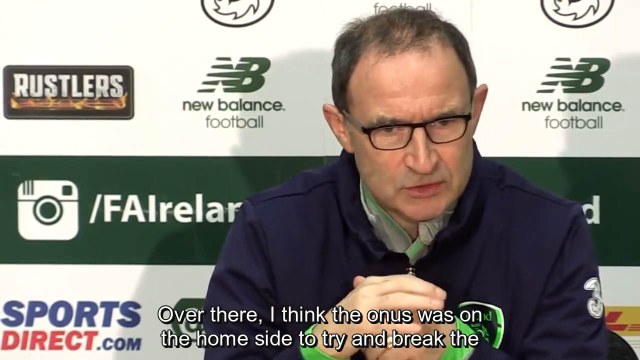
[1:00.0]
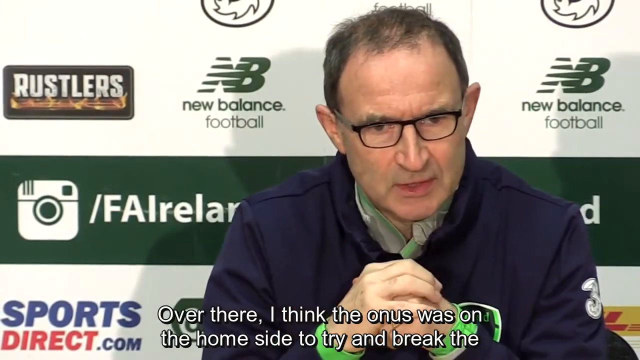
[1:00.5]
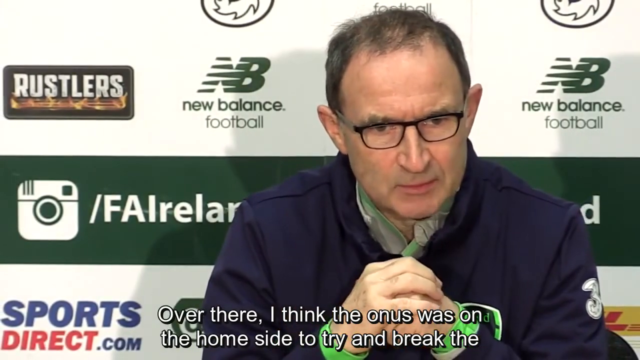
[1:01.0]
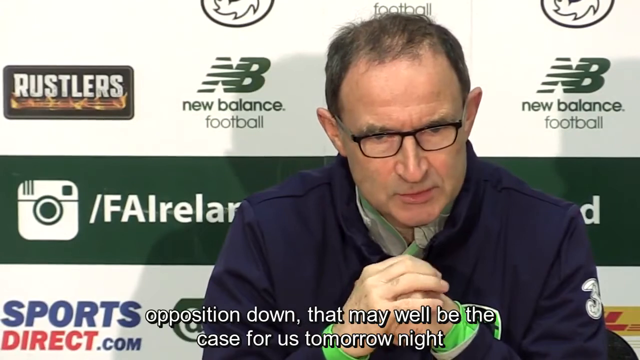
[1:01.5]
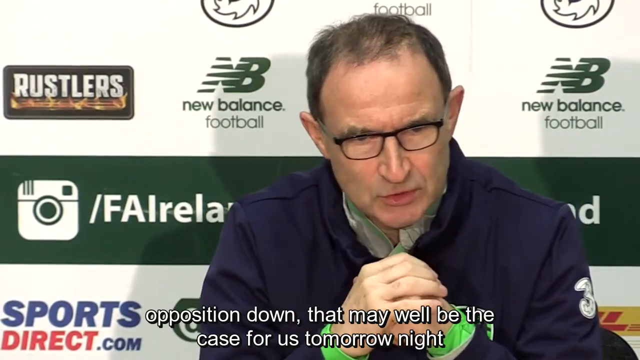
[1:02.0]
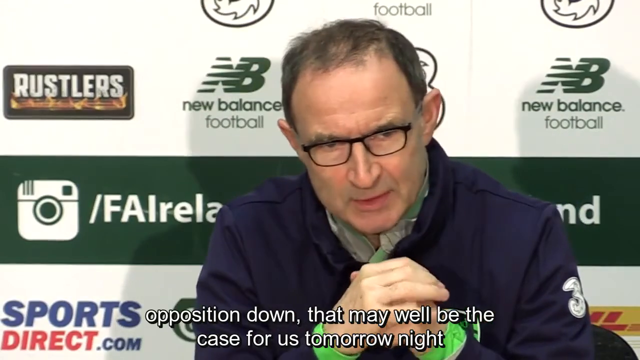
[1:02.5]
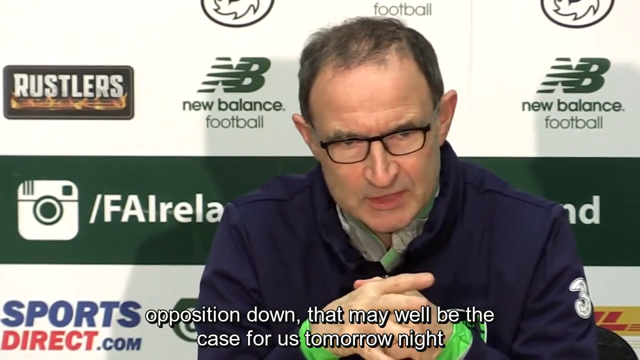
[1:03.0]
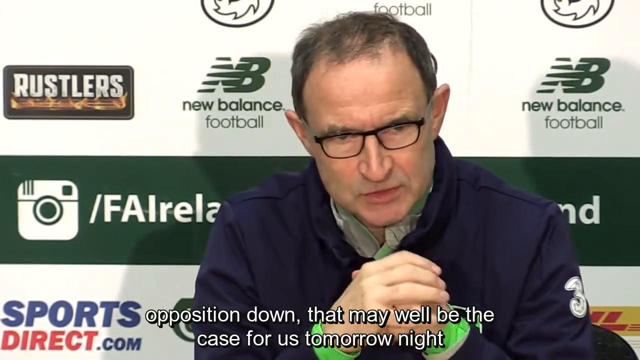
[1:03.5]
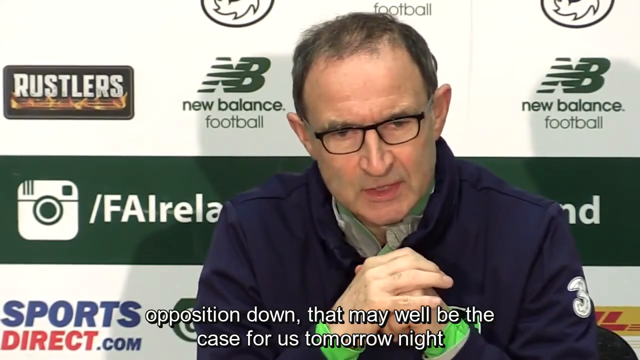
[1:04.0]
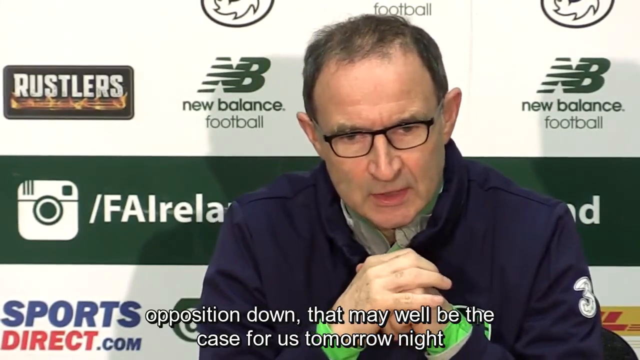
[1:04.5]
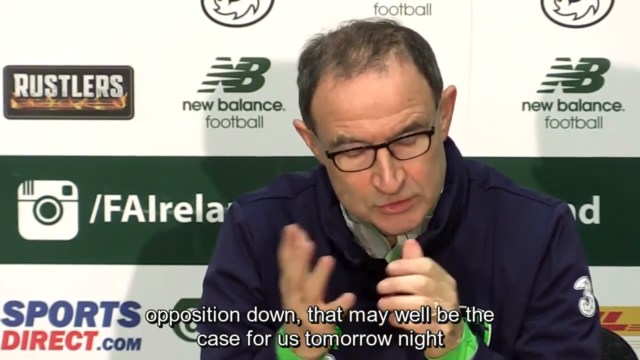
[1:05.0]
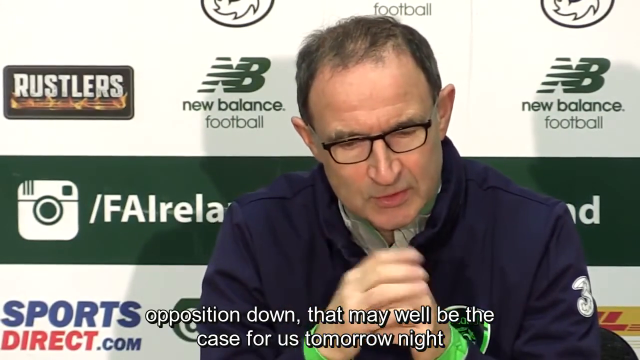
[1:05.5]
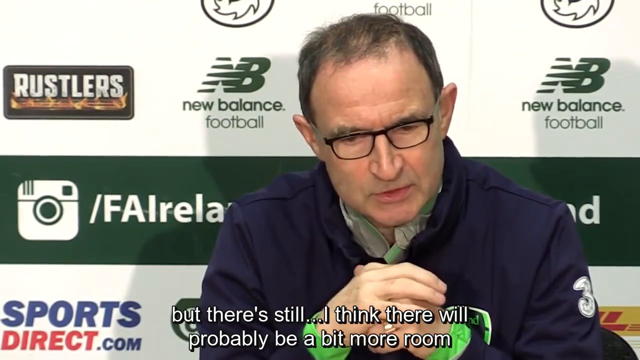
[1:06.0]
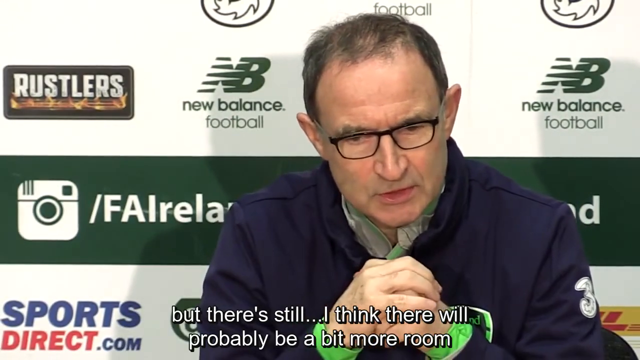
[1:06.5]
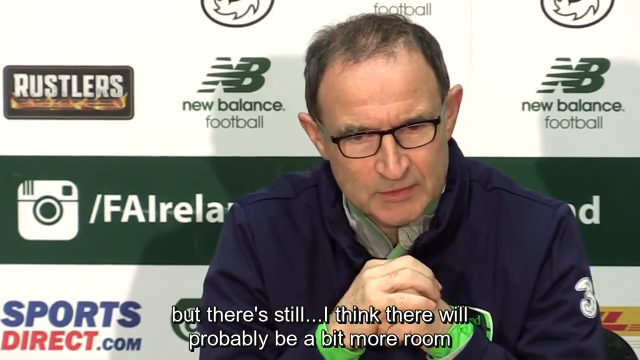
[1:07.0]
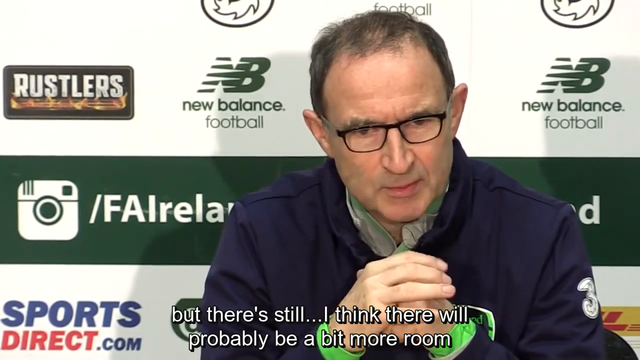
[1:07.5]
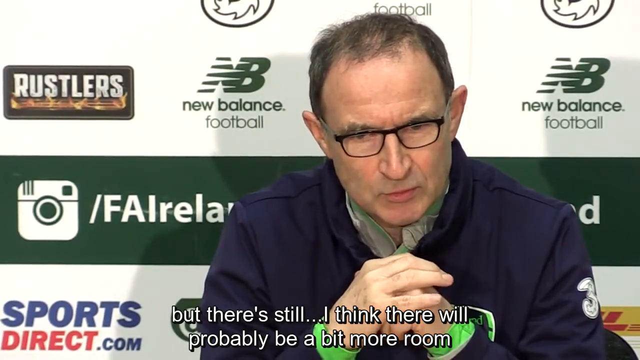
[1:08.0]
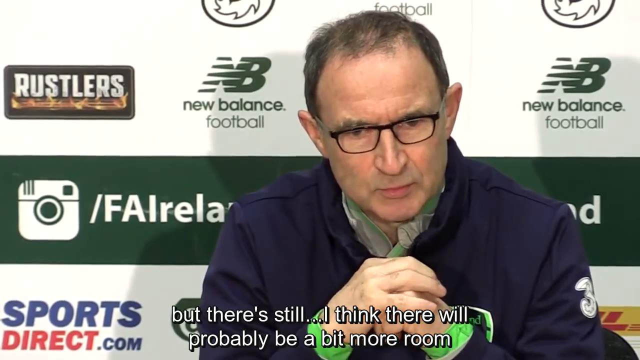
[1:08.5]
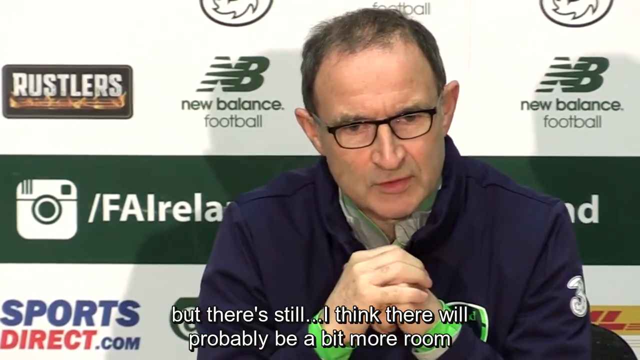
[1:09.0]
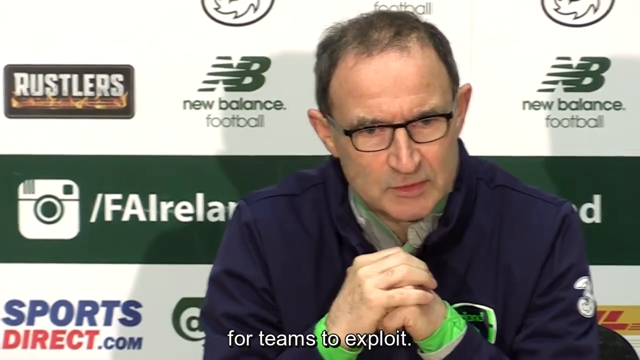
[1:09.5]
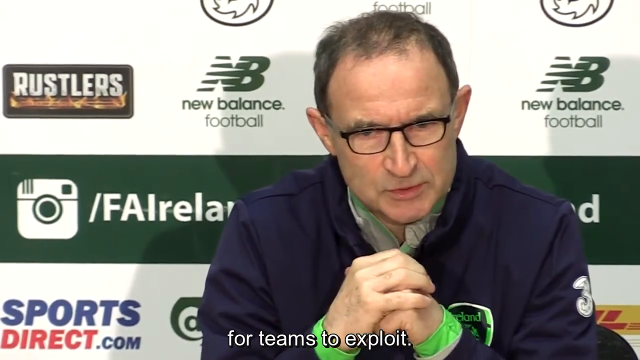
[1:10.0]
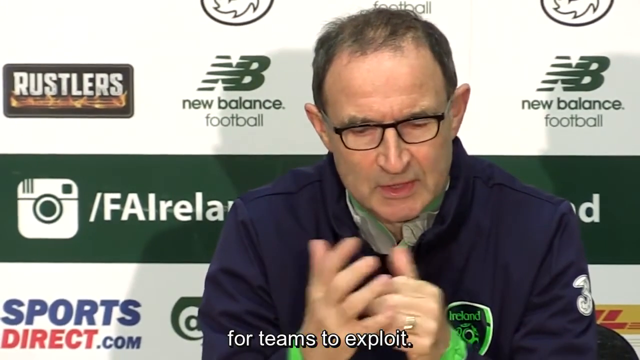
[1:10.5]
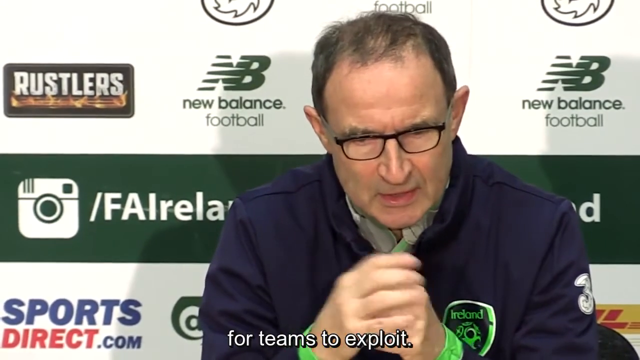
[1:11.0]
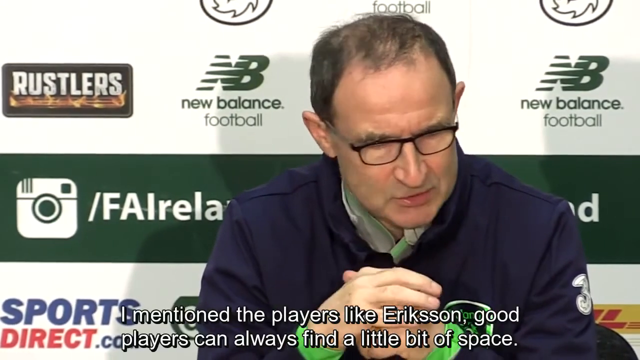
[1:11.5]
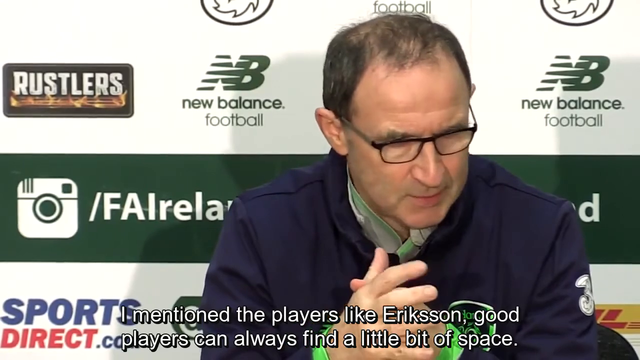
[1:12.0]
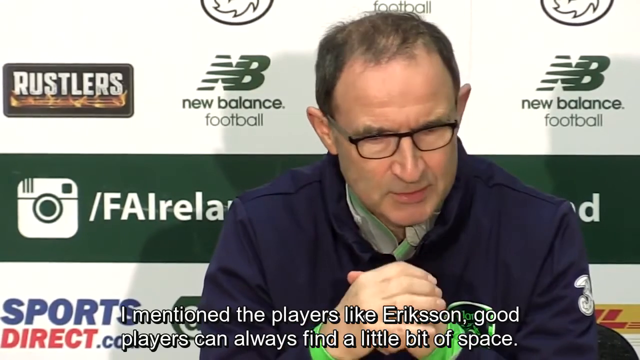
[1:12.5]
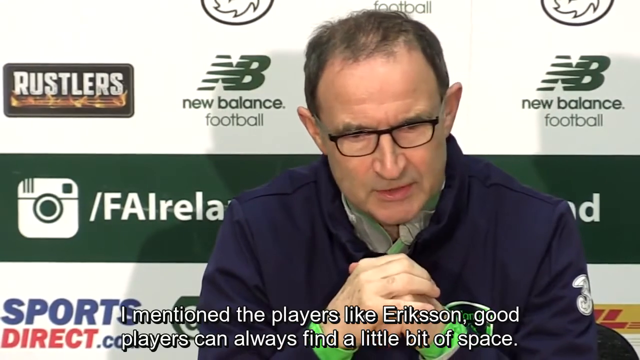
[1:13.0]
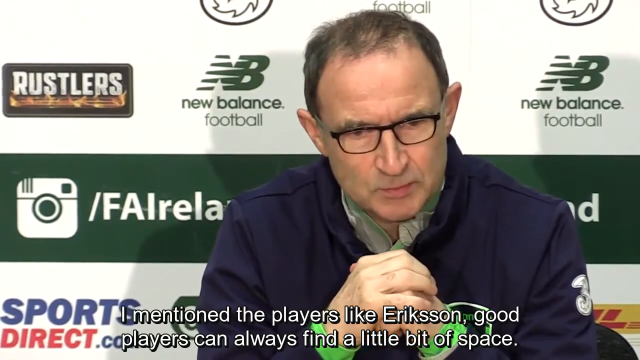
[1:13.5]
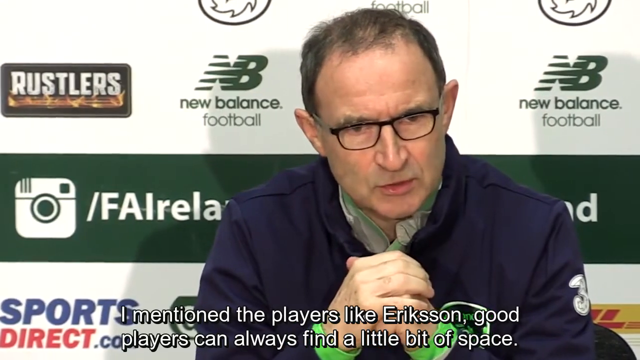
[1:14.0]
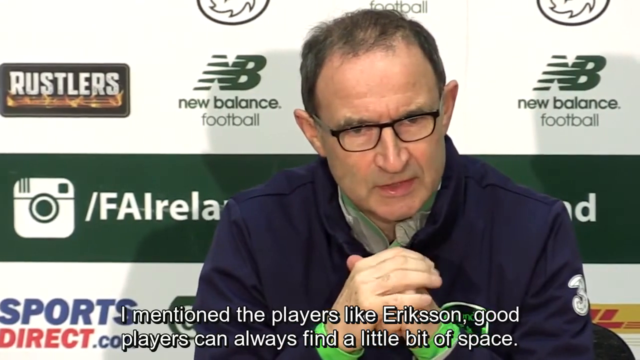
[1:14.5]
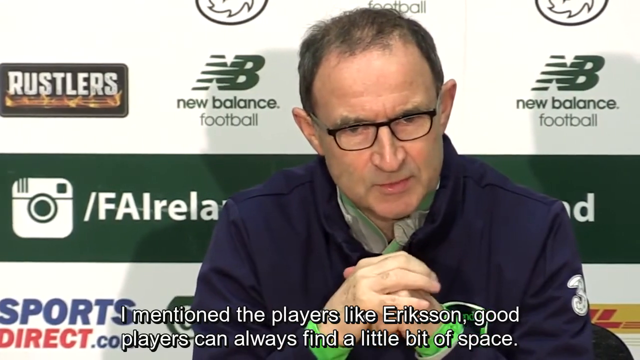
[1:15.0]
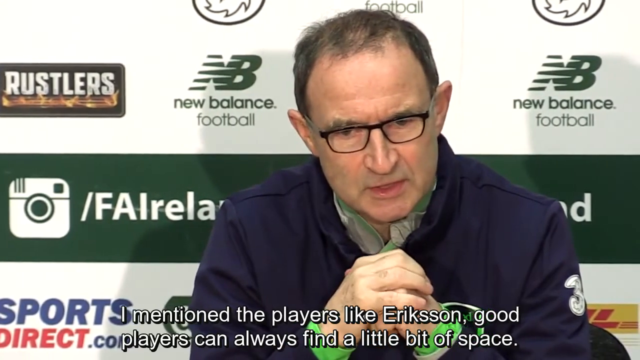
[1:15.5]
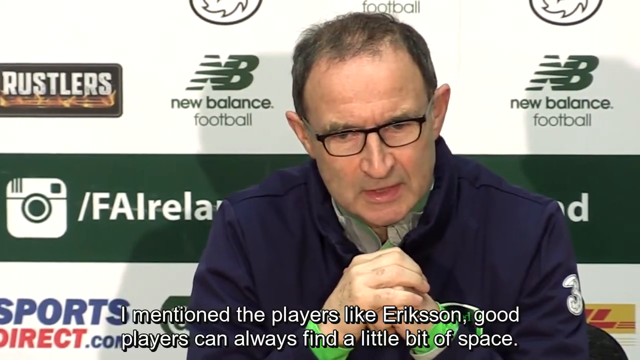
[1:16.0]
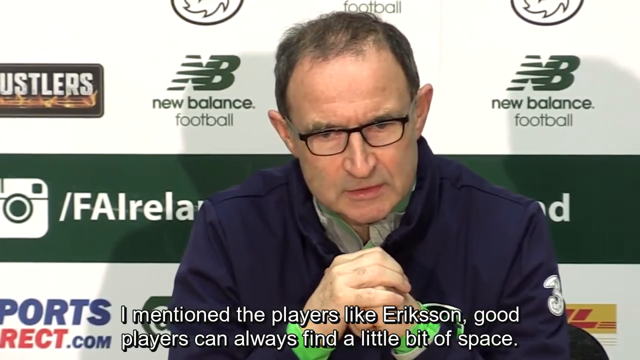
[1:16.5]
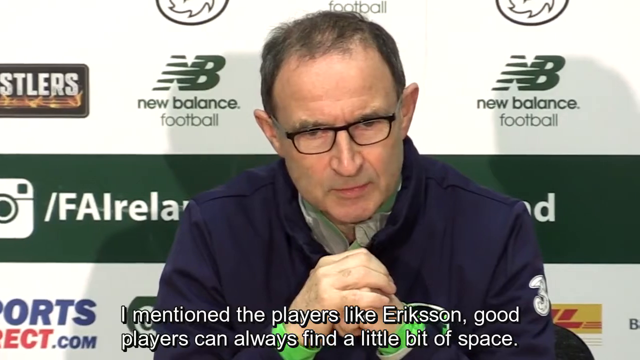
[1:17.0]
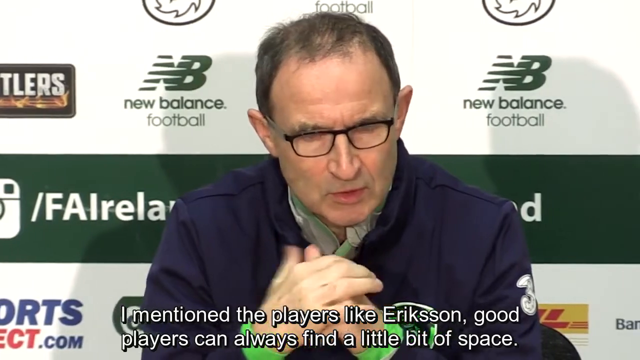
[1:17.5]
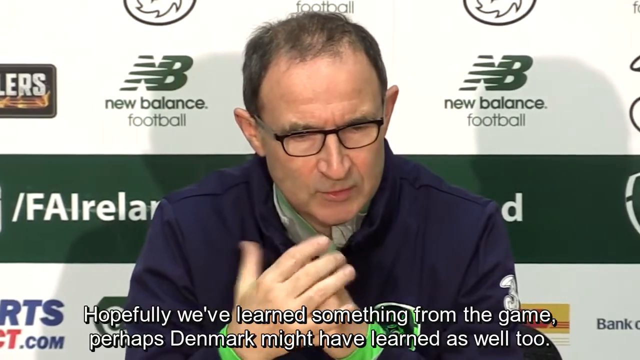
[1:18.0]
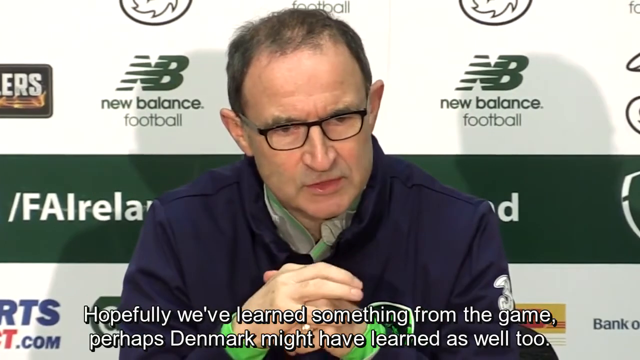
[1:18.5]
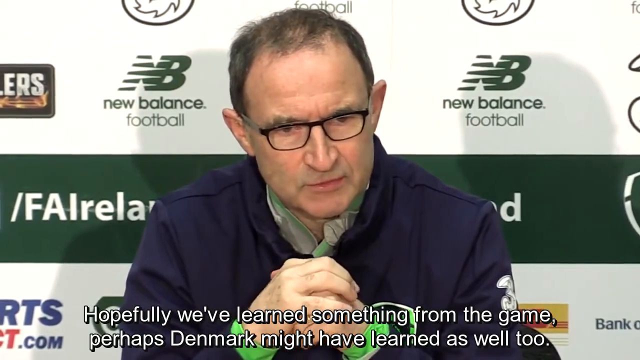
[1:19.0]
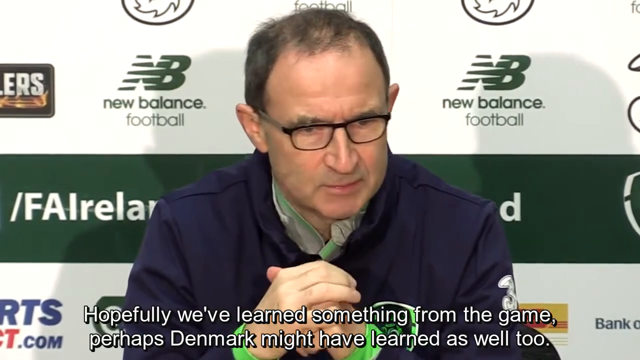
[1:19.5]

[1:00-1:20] The shot focuses on one man who appears to be talking to interviewers. He is white, with black glasses, short hair and no facial hair, and wears a blue shirt with green cuffs over a white undershirt. His hands are pressed together and he looks straight ahead, occasionally gesturing and moving his fingers around; a ring is visible on his finger. He talks and gestures continuously. The background behind him is mostly white with advertisement logos, some repeating with a green section, including SportsDirect.com, New Balance Football and Rustlers. He seems to be discussing strategies for a sports game, talking about the next game, about other players who are good players, and about how they have learned from past games. Captions at the bottom highlight what he is talking about.